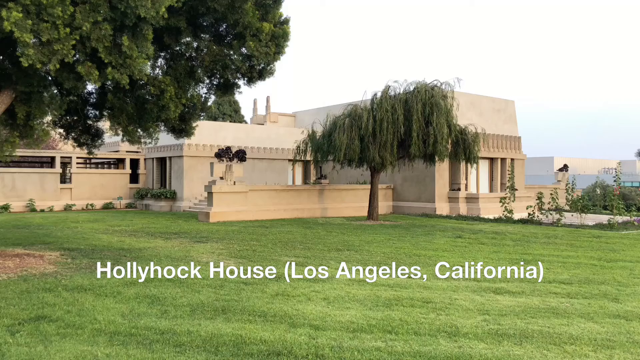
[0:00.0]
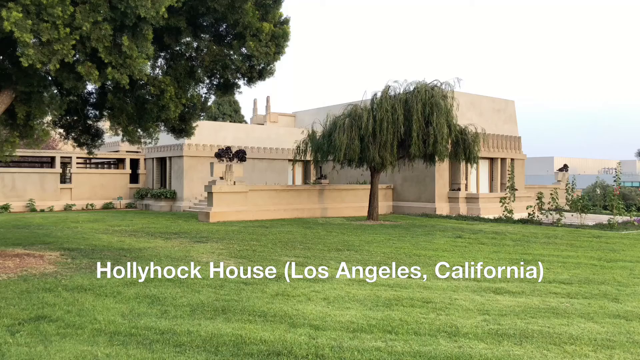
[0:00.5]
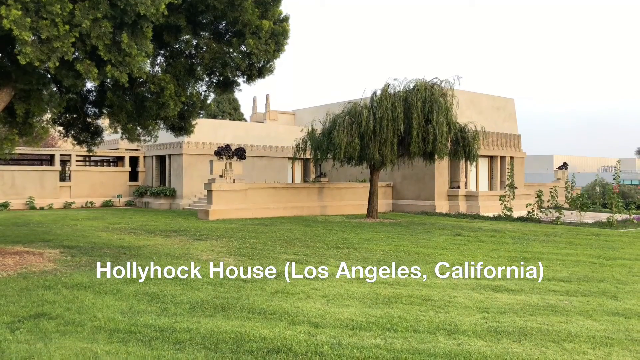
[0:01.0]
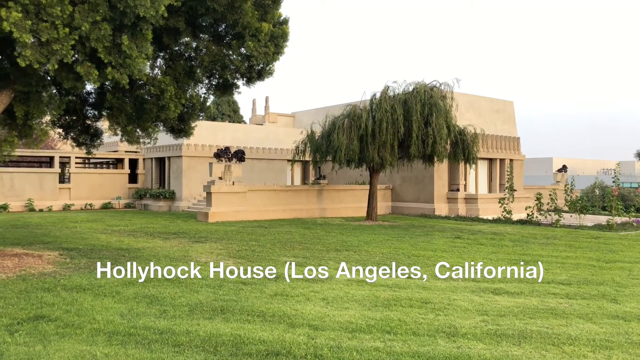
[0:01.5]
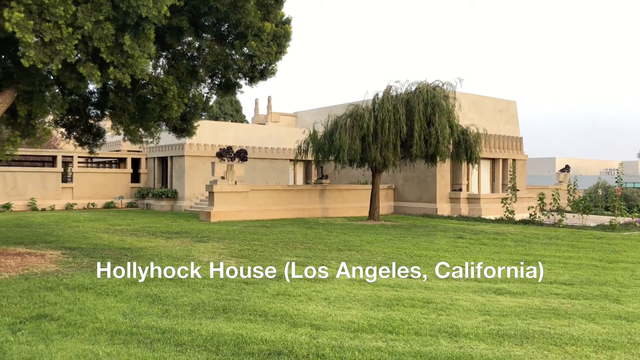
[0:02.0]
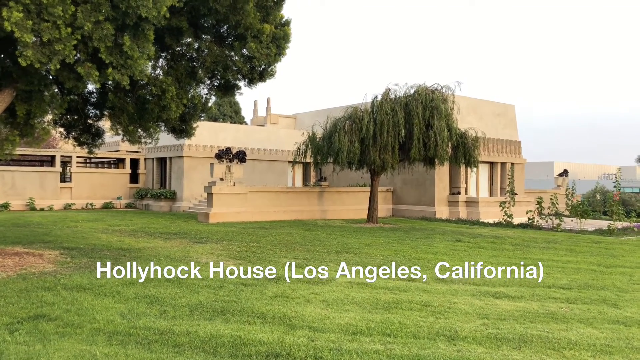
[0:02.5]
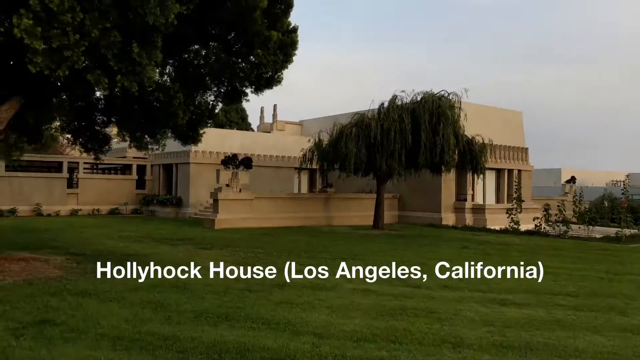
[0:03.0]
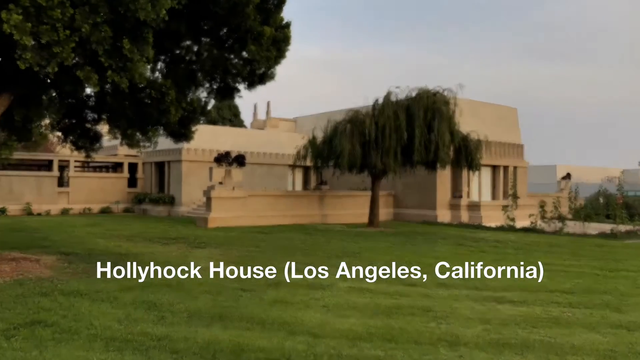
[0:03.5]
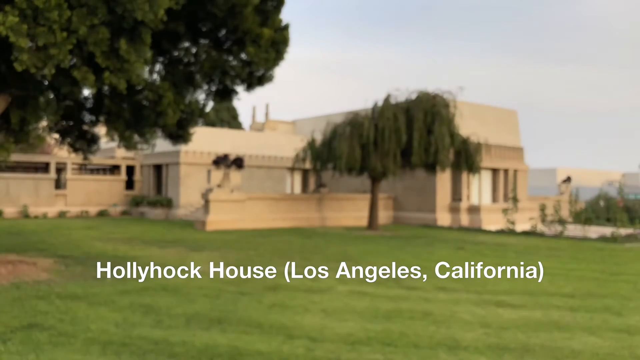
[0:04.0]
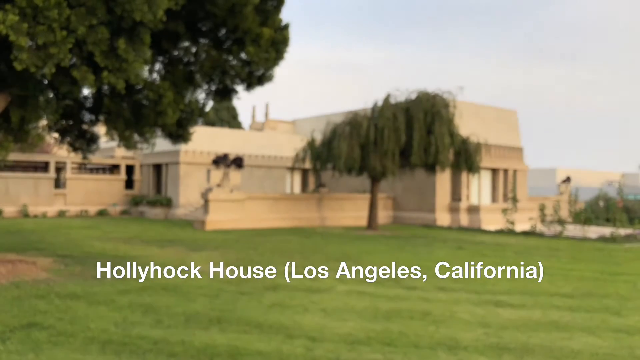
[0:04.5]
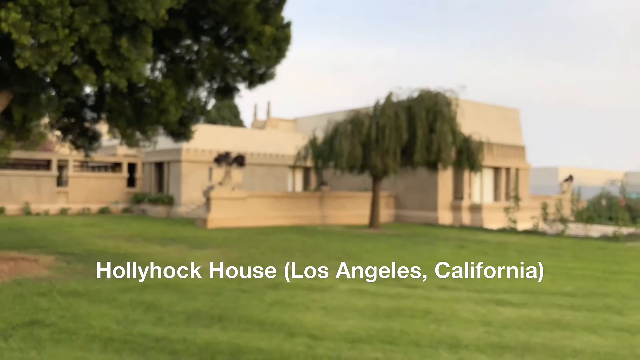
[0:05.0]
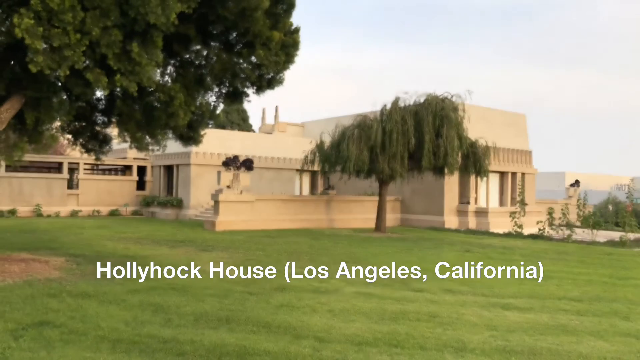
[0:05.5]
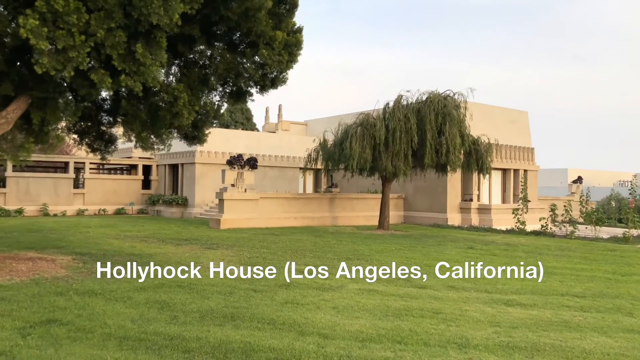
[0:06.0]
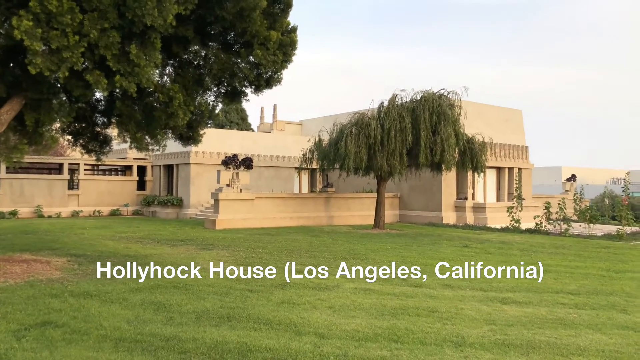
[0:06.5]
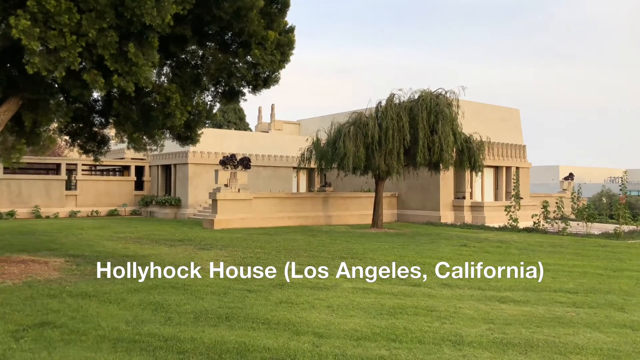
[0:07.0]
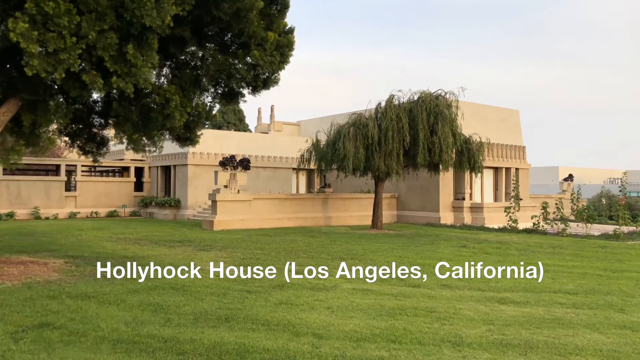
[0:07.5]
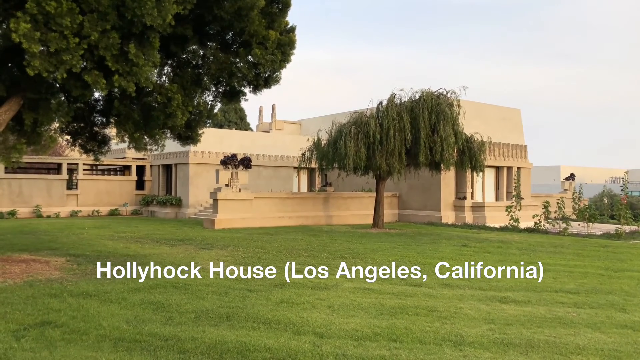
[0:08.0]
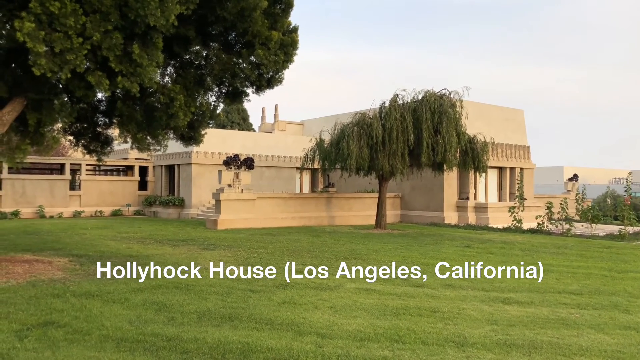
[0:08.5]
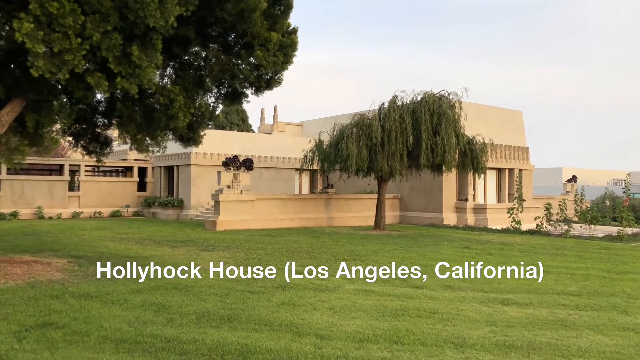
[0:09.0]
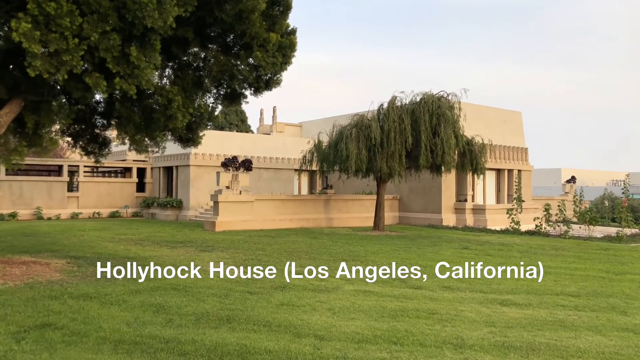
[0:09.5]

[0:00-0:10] A building with very square, angular architecture, almost entirely white, stands in the background with a very large, flat green front yard containing a willow tree and a larger, old-looking tree on the left. On-screen text identifies it as the Hollyhock House in Los Angeles, California. The camera shakes a little as the wind blows and drifts in and out of focus as it tries to focus on the building. Along the edges of the building are small plants that appear to have been recently placed, a couple of them in plant pots somewhat built into the sides of the building, and a small vine-style garden is visible on the right side of the scene. Apart from the wind moving it, the camera remains mostly stationary.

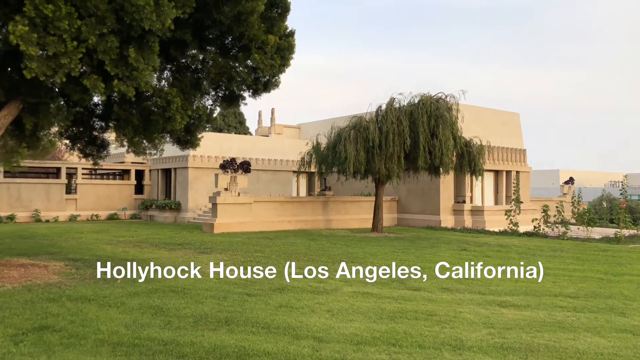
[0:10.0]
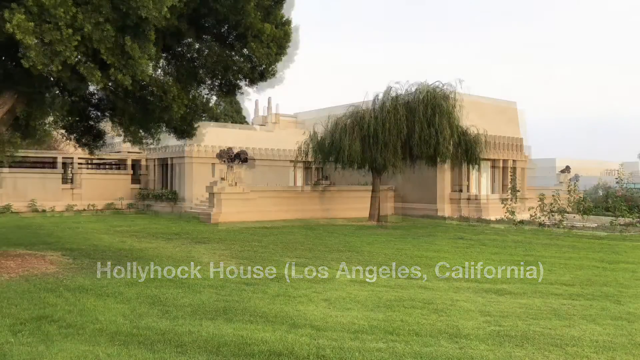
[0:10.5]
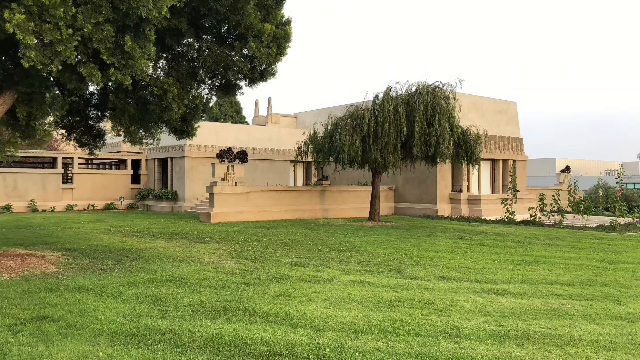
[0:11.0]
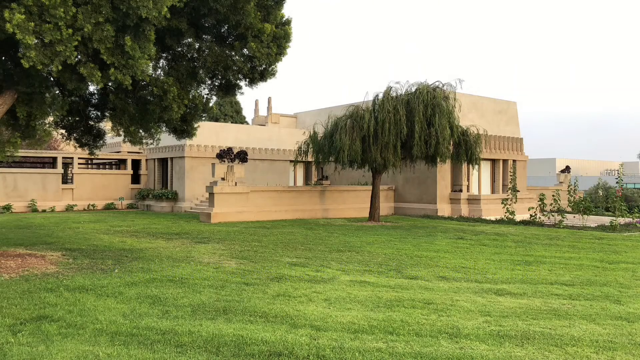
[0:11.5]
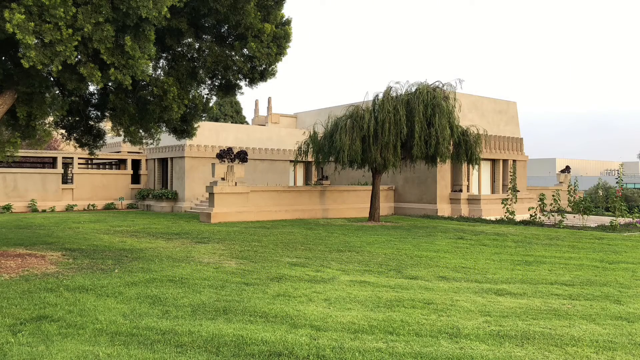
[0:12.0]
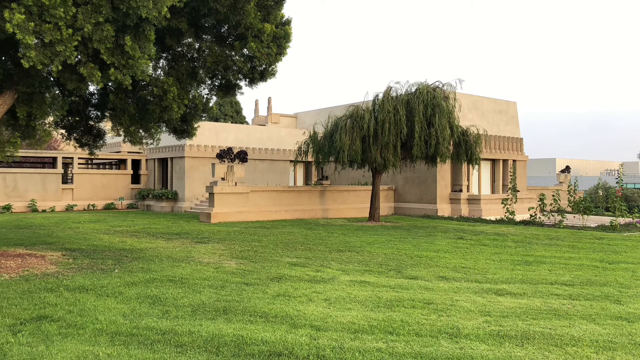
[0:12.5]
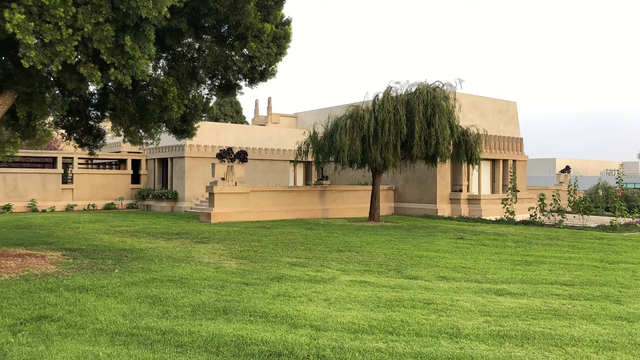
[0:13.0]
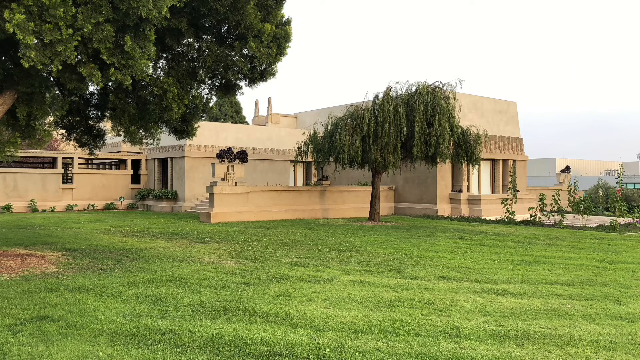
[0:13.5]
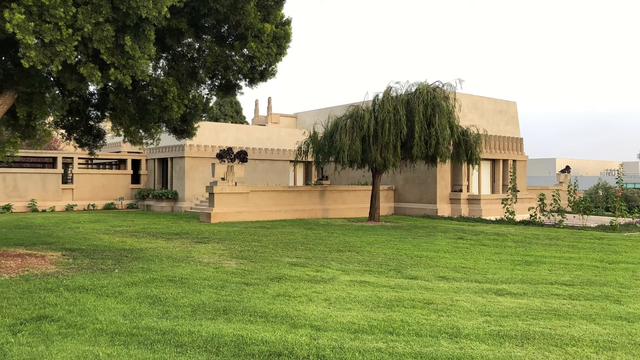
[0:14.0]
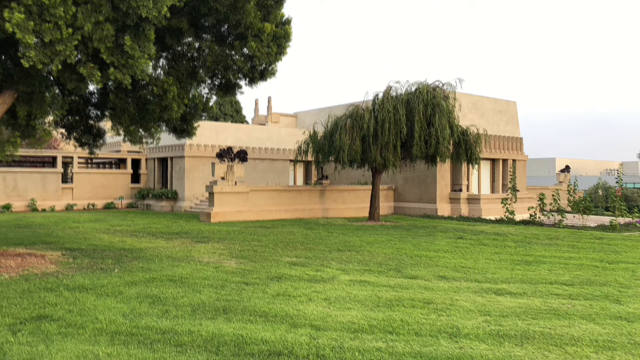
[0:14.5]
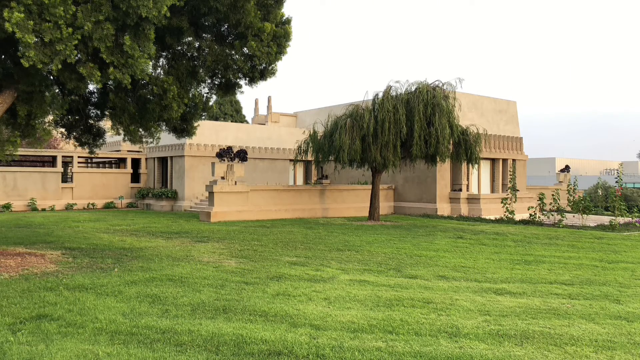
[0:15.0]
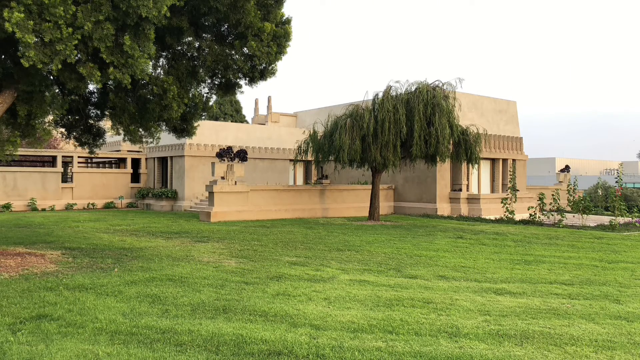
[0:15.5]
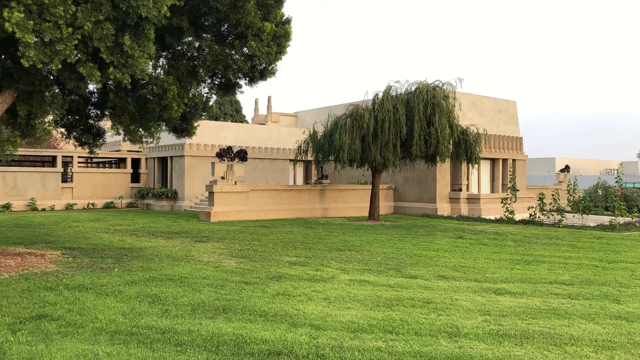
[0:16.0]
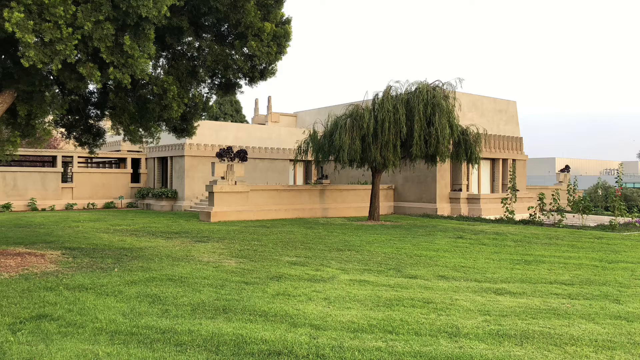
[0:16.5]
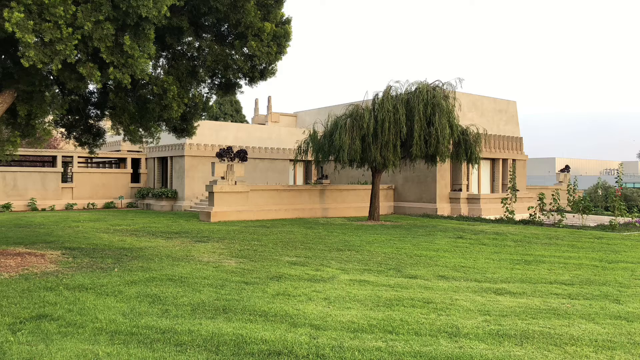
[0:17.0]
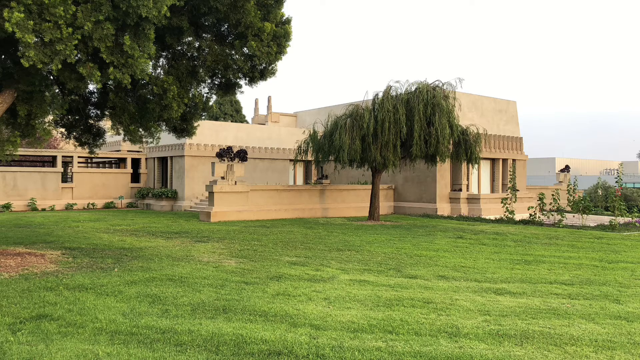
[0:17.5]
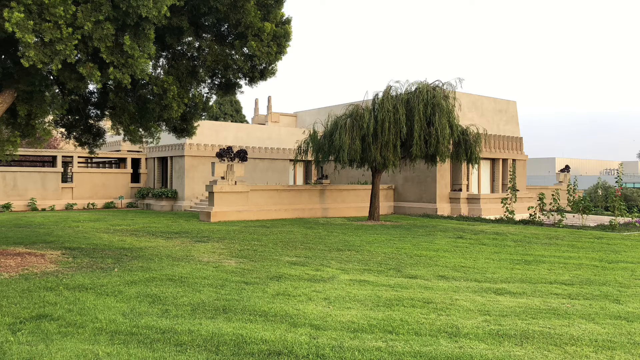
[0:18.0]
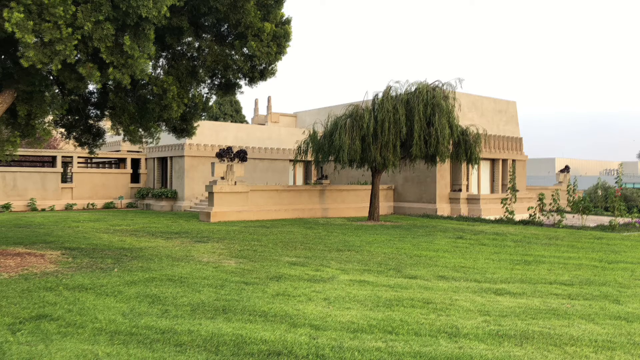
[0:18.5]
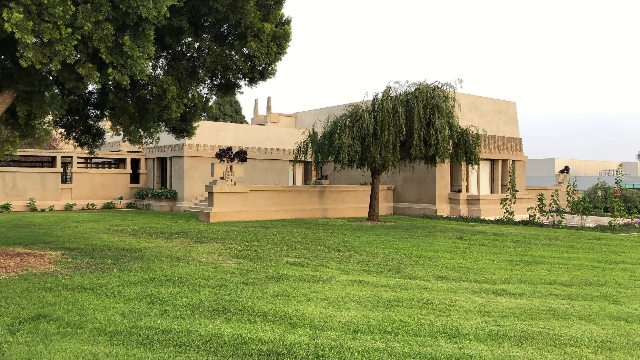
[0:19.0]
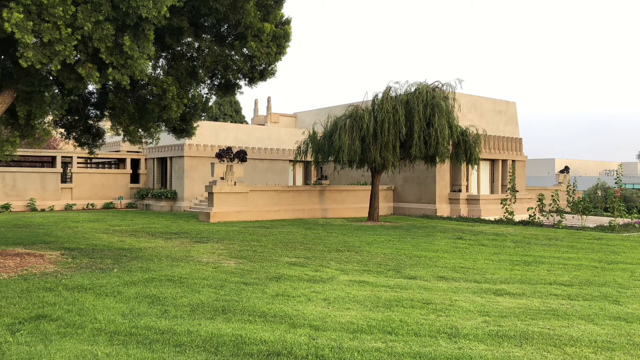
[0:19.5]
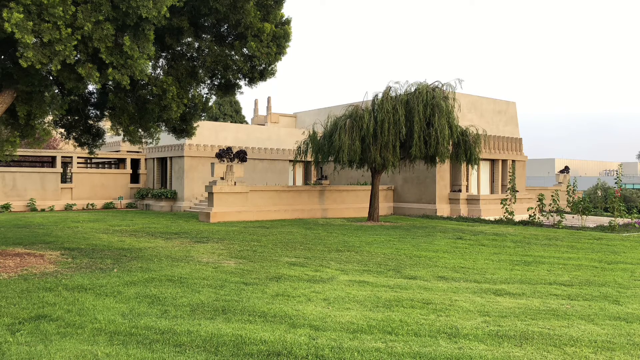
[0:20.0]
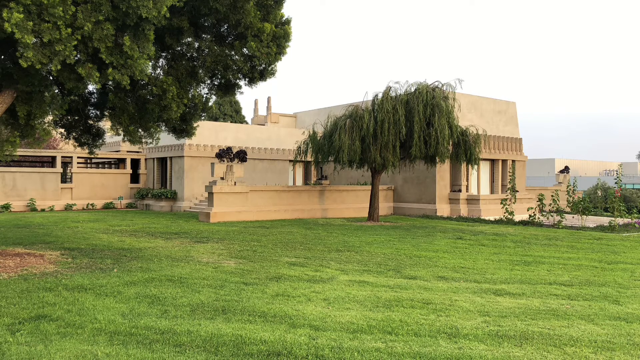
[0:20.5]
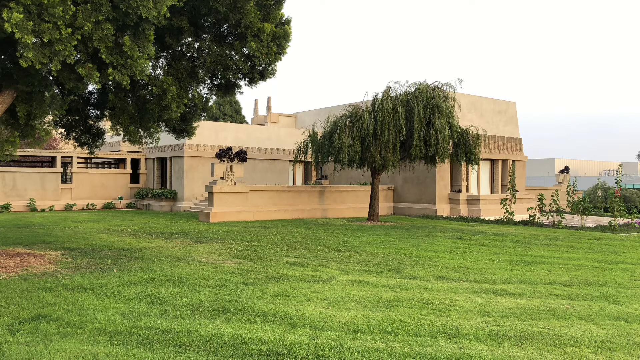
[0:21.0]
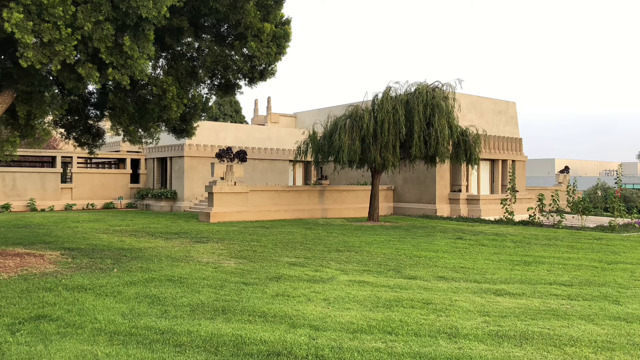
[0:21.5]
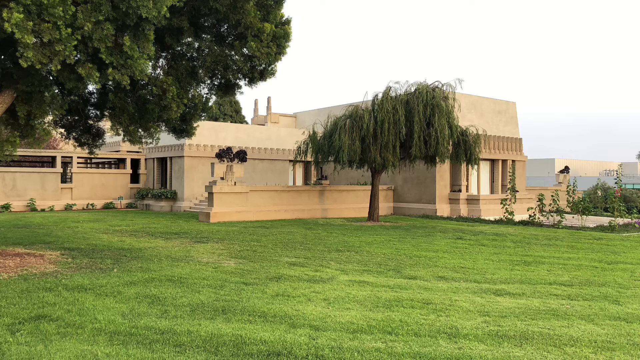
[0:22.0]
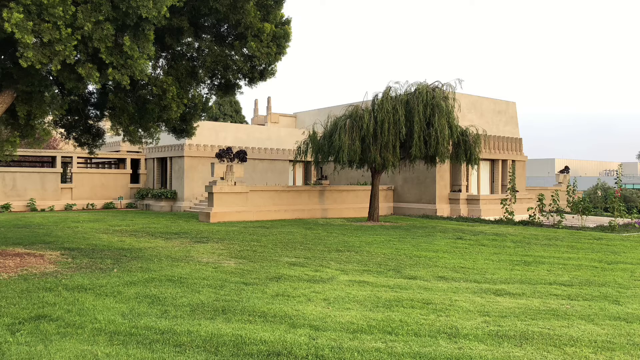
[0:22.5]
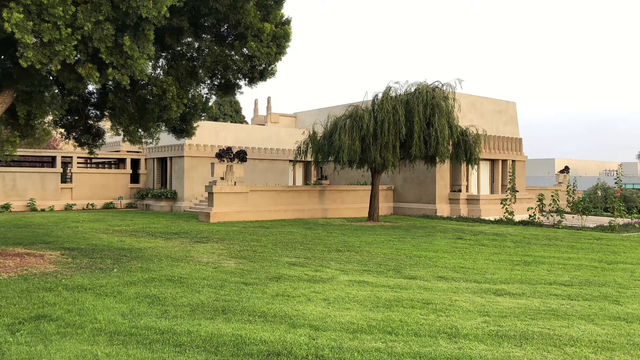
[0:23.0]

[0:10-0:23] The video transitions from live footage of the house to a screenshot or photo of the same scene, with the details a little more in focus. Since it is a still image, there is no longer any movement from the wind. The angular white Hollyhock House is in the background, with some sort of patio-style area on the left; its interior can't be seen, but its presence is visible through some of the small window areas. The square-like structure in the middle has crenellations along the top of its outer roofing, making it look somewhat like a medieval European castle. The structure on the right is mostly square and appears to be made of pure concrete, but its roof angles inward slightly, giving it more of a rhombus shape toward the top. The building sits on a big grassy field with a willow tree and what appears to be a big oak tree on the left. In the fog in the distance on the right, there appear to be a series of shipping containers or possibly a dockyard, suggesting the location may be near the seaside.